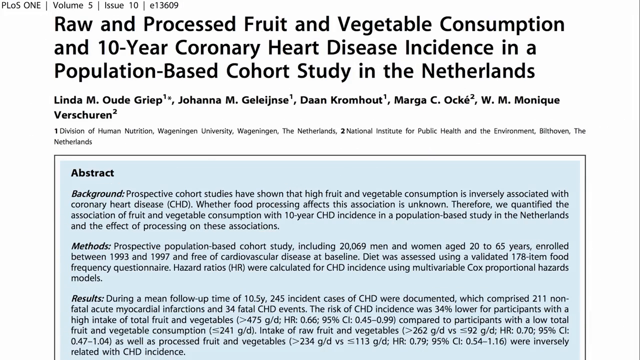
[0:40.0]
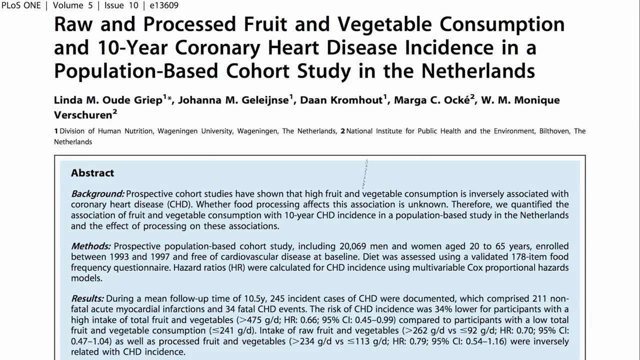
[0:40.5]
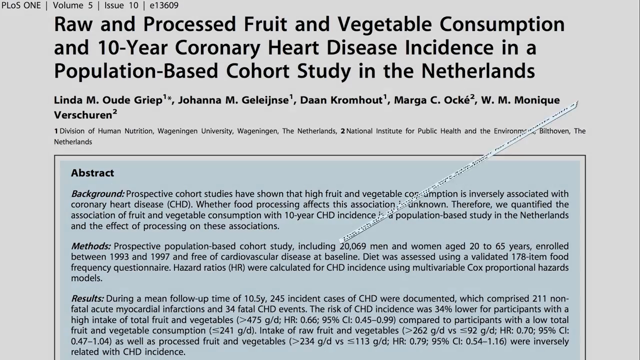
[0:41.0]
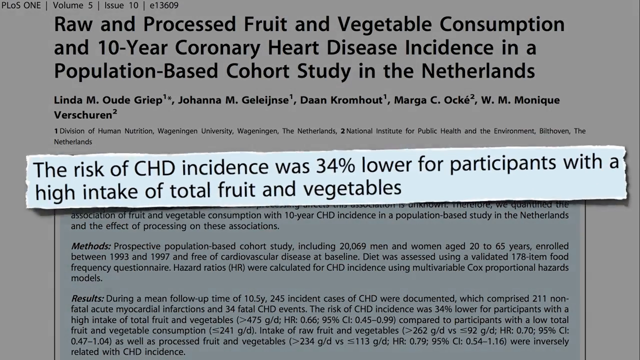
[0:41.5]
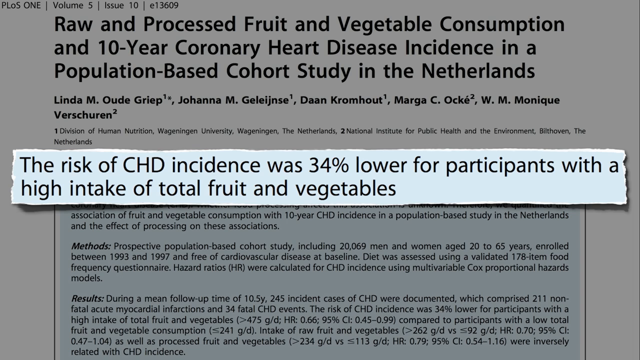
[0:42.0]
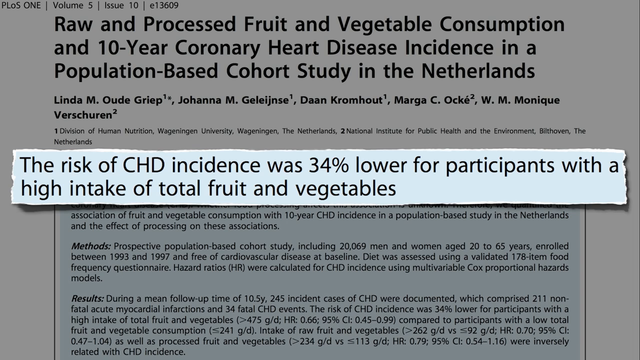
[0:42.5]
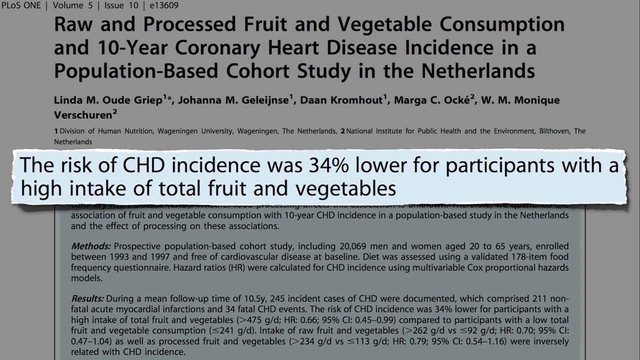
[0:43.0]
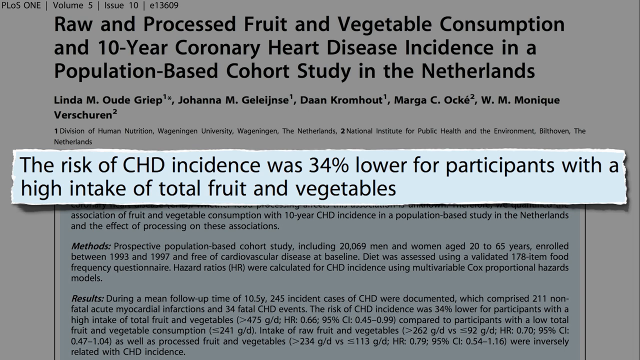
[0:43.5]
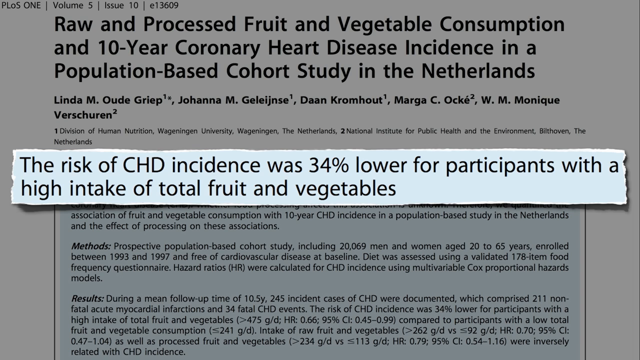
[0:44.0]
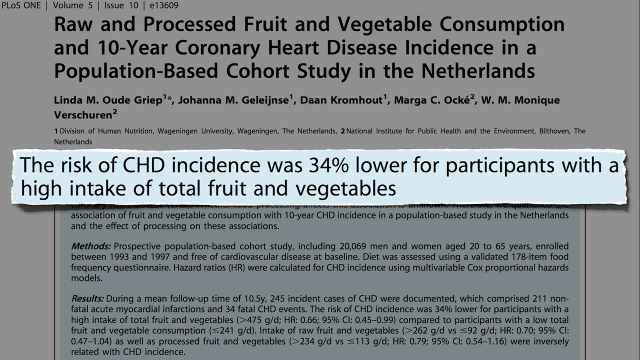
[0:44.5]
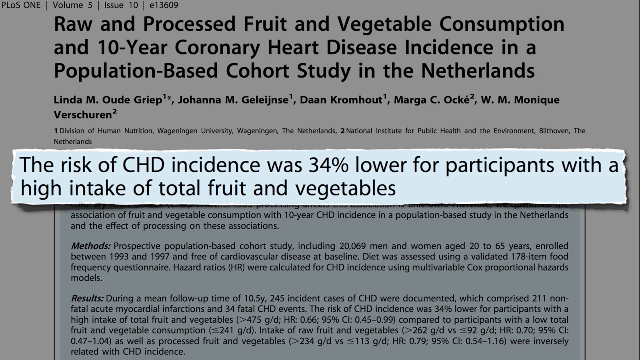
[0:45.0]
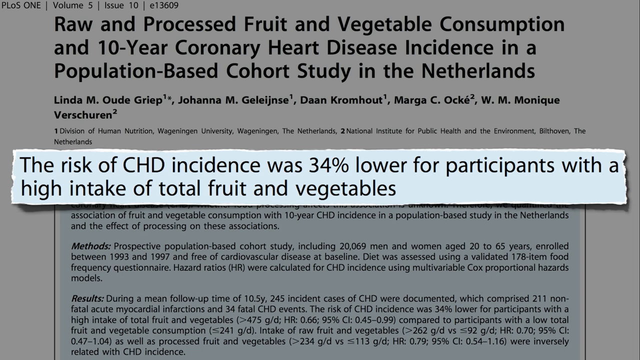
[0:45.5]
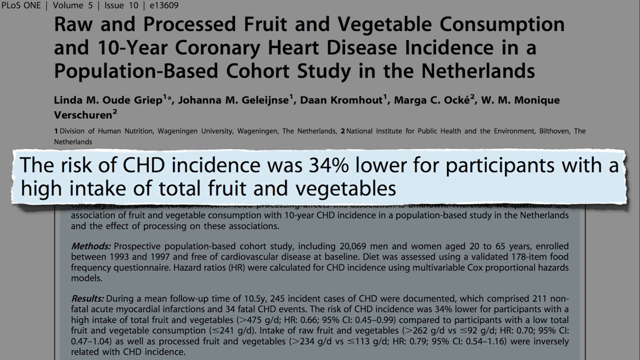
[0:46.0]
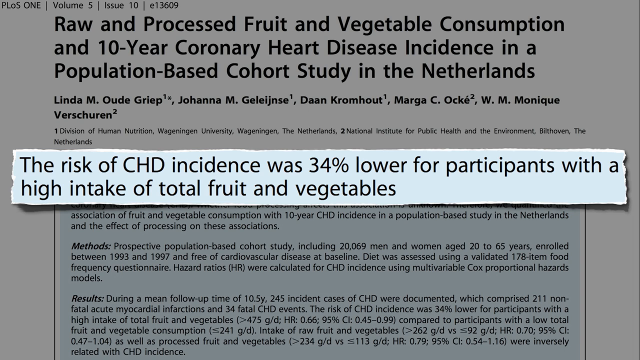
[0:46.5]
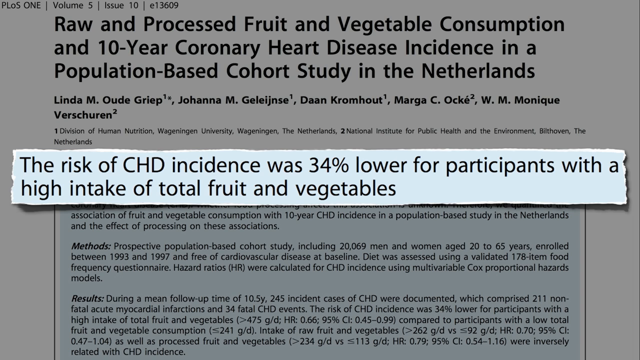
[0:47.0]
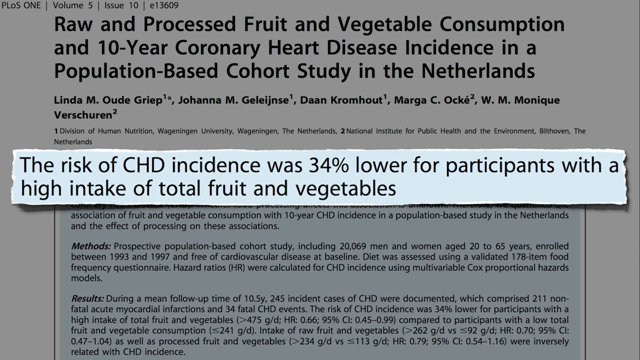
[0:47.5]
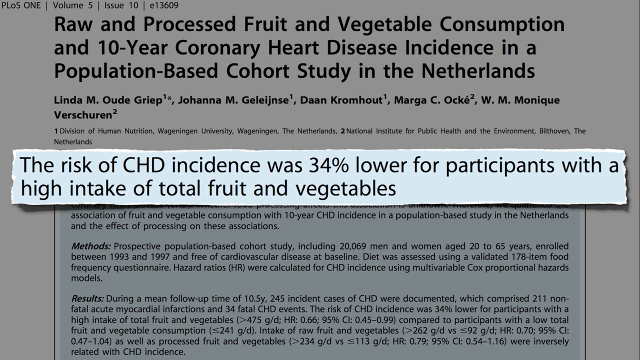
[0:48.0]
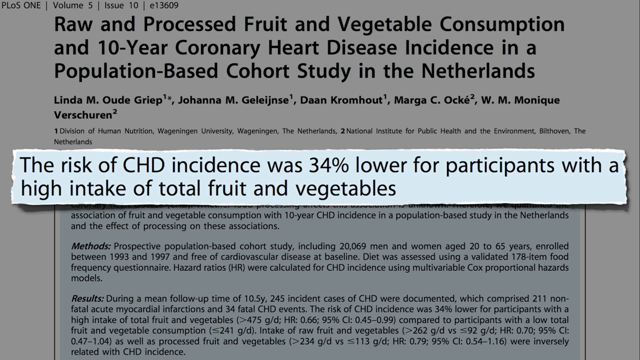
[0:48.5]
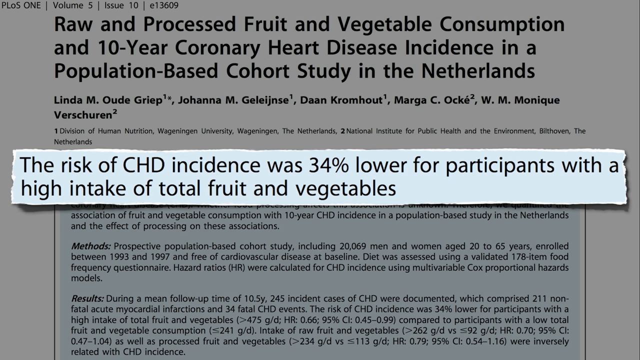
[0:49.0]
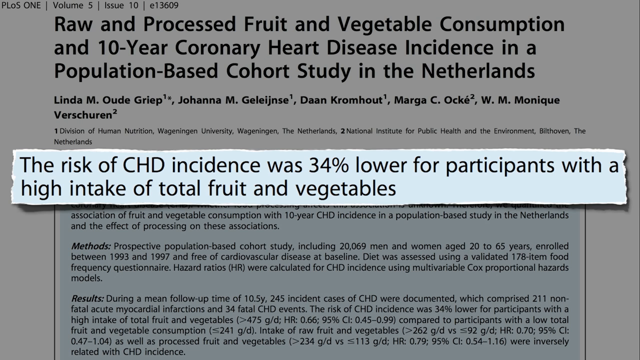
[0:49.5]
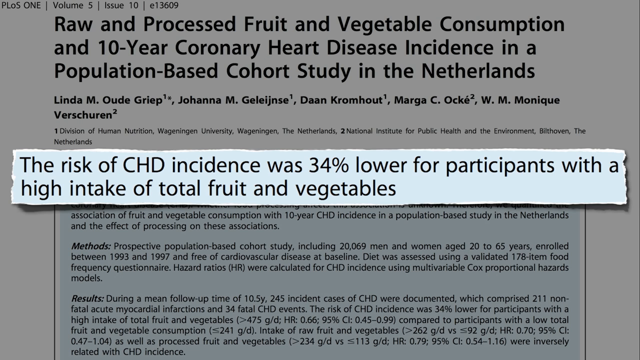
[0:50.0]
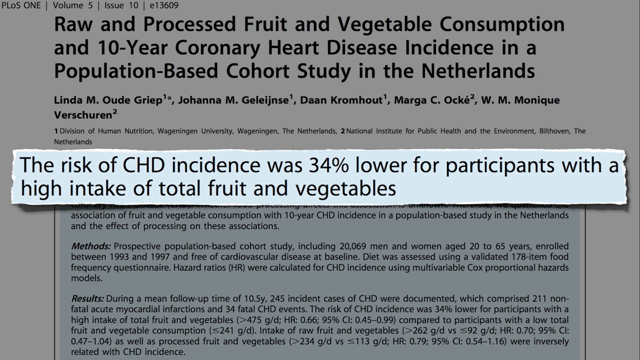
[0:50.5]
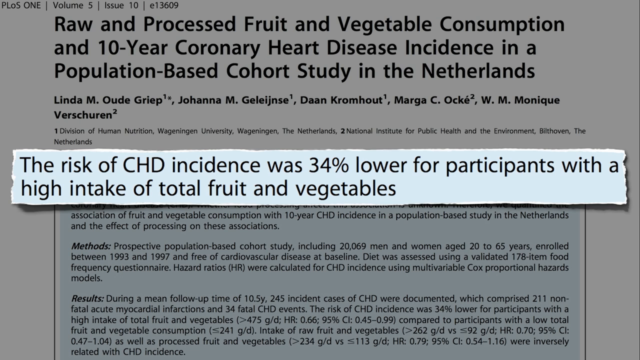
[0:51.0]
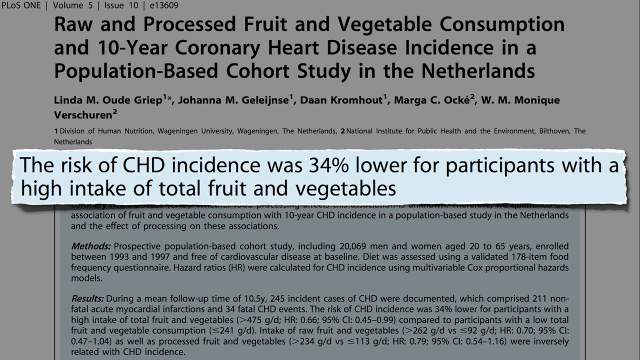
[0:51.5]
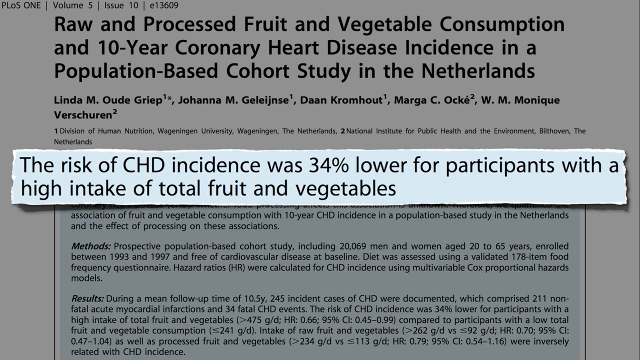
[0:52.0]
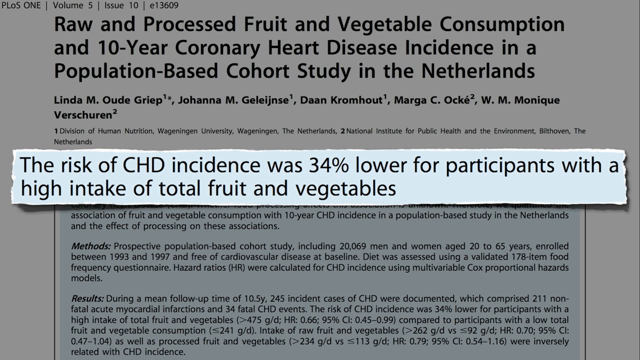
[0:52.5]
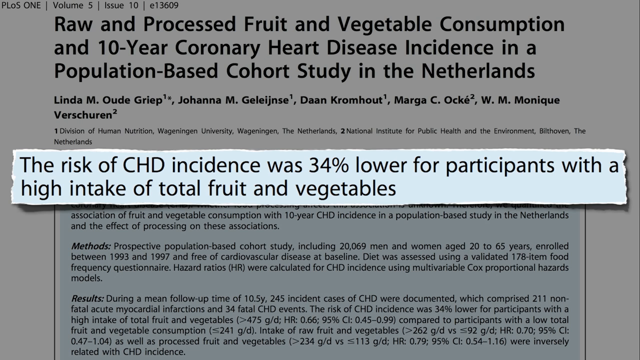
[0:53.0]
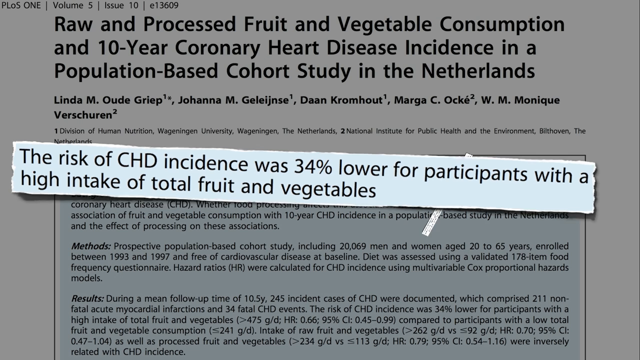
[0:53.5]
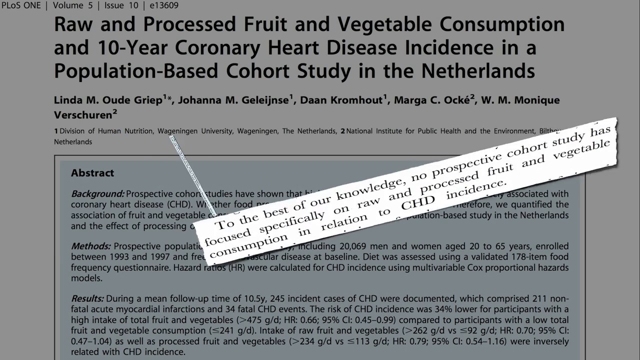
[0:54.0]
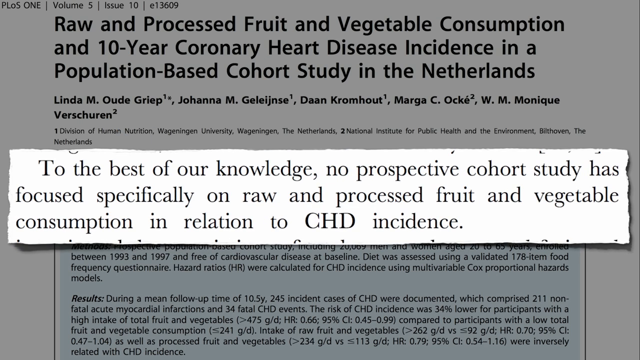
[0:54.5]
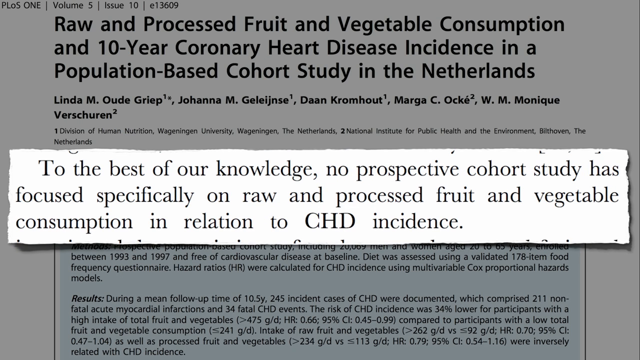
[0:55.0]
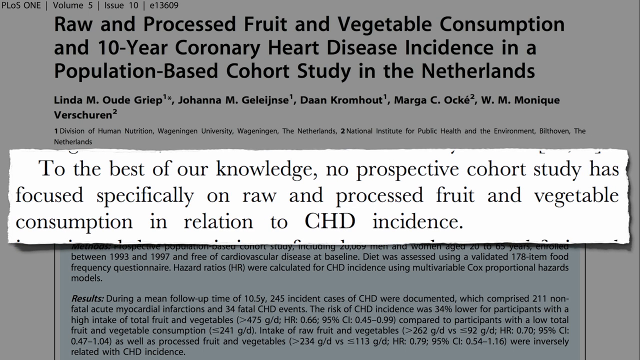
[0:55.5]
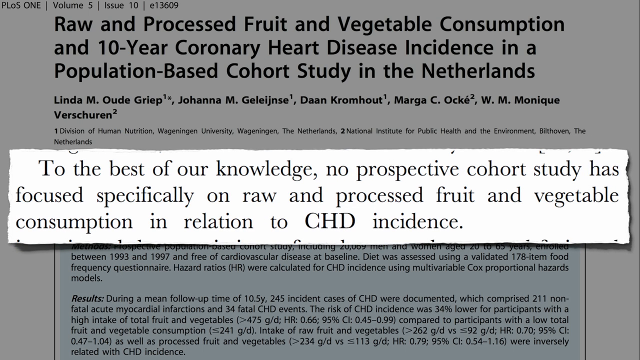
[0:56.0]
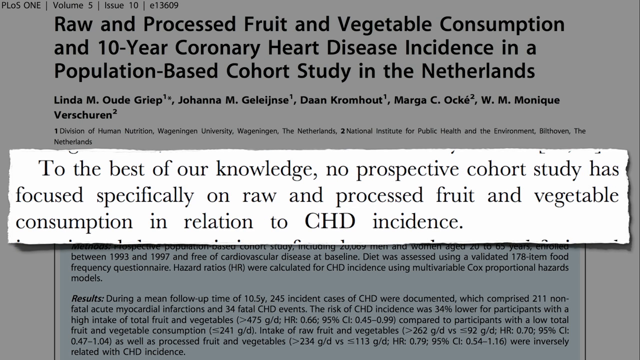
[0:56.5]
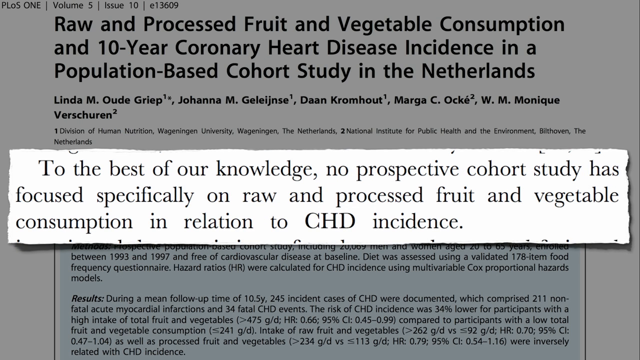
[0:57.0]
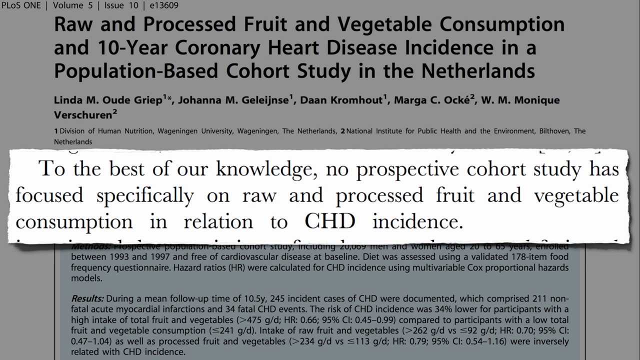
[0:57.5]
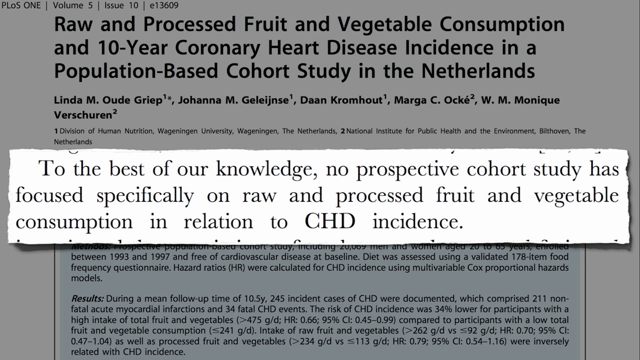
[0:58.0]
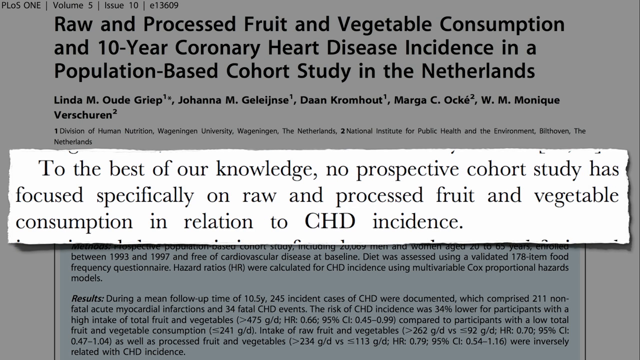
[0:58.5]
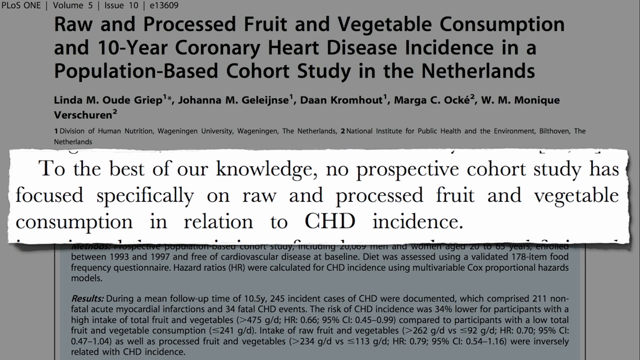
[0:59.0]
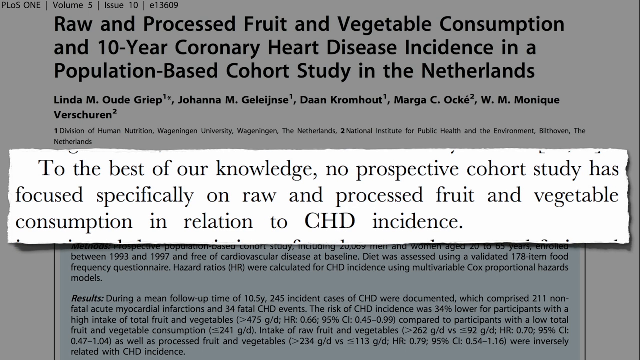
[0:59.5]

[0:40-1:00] A slide about fruit and vegetable consumption and coronary heart disease reads "raw and processed fruit and vegetable consumption and 10-year coronary heart disease incidence in a population-based cohort study in the Netherlands," by Linda M. Udgriep, Johanna M. Gellin-Ginsey, Don Kromhout, Marga Oki and Monique Verschuren. The abstract, in blue in a rectangle, reads: "Background. Prospective cohort studies have shown that high fruit and vegetable consumption is inversely associated with coronary heart disease, CHD. Whether food processing affects this association is unknown. Therefore, we qualify the association of fruit and vegetable consumption with 10-year CHD incidence in a population-based study in the Netherlands and the effect of processing on these associations. Methods. Prospective population-based cohort study including 20,069 men and women aged 20 to 65 years enrolled between 1993 and 1997 and free of cardiovascular disease at baseline. Diet was assessed using a validated 178-item food frequency questionnaire. Hazard ratios were calculated for CHD incidence using multivariable Cox proportional hazards models." The results follow, but they are somewhat below the visible part of the video.